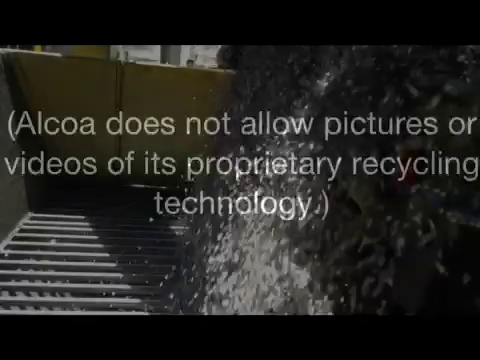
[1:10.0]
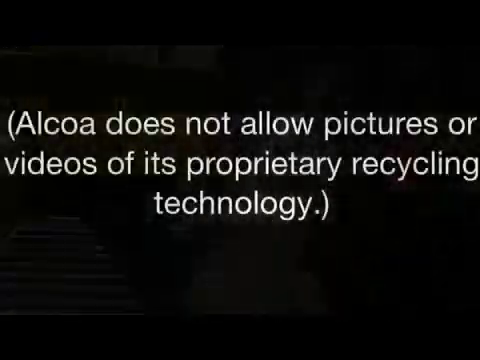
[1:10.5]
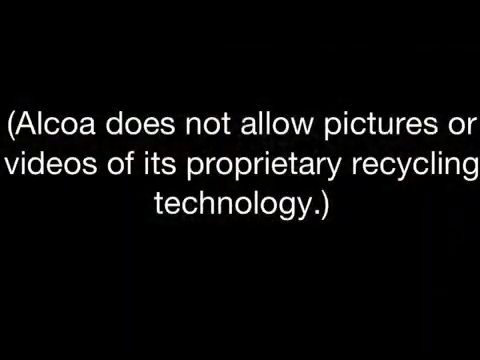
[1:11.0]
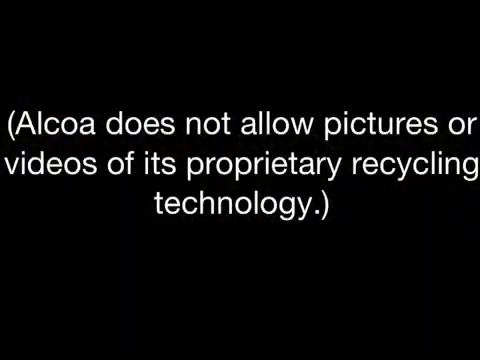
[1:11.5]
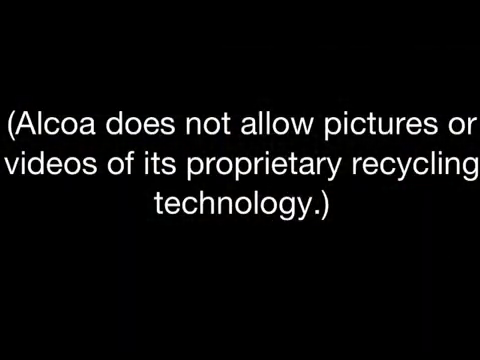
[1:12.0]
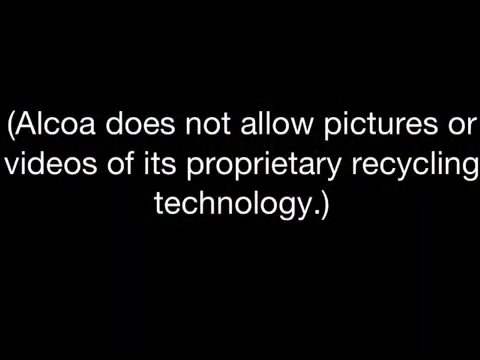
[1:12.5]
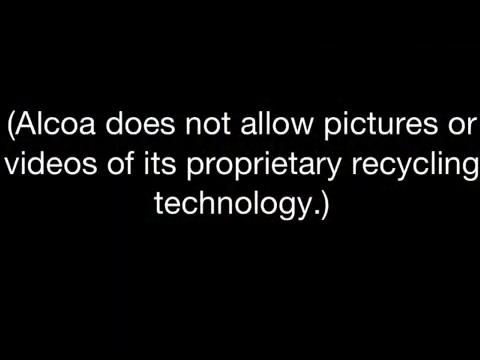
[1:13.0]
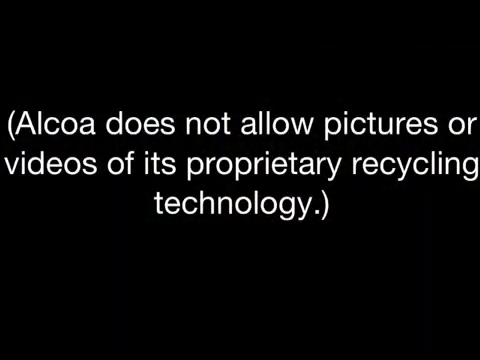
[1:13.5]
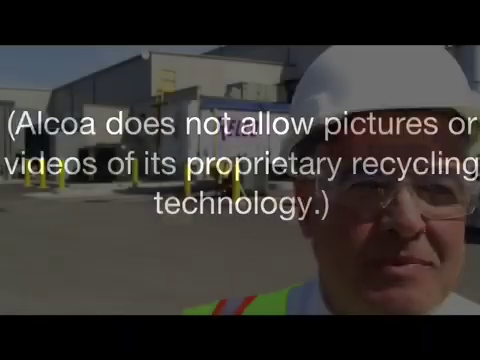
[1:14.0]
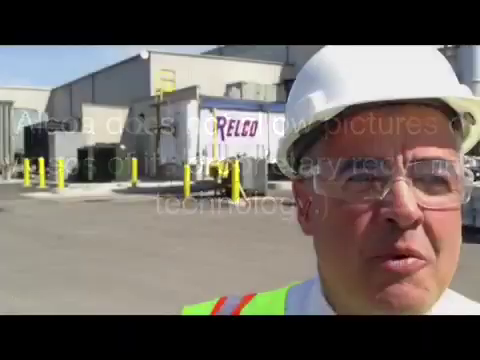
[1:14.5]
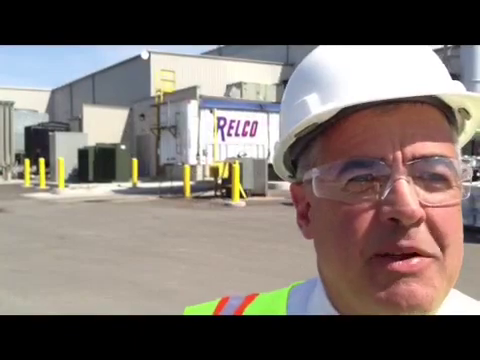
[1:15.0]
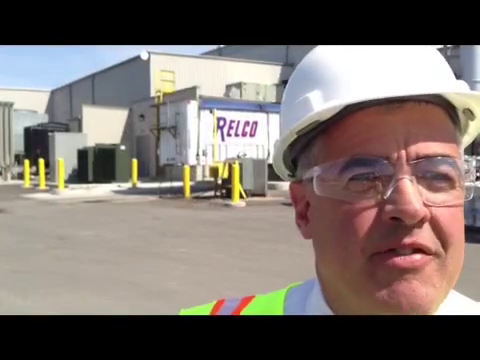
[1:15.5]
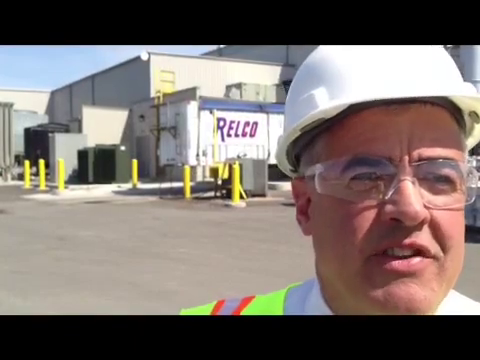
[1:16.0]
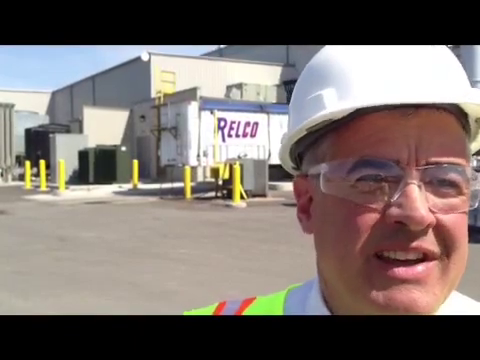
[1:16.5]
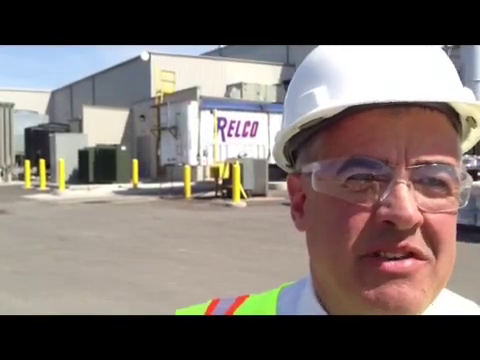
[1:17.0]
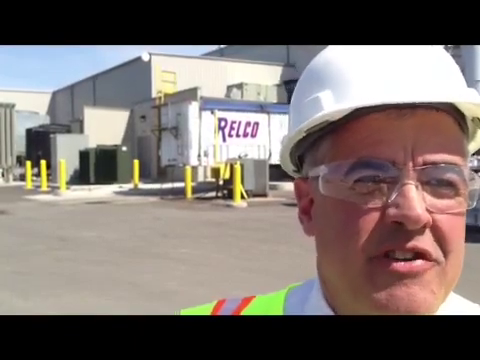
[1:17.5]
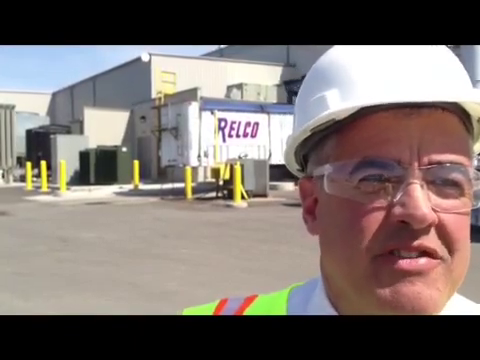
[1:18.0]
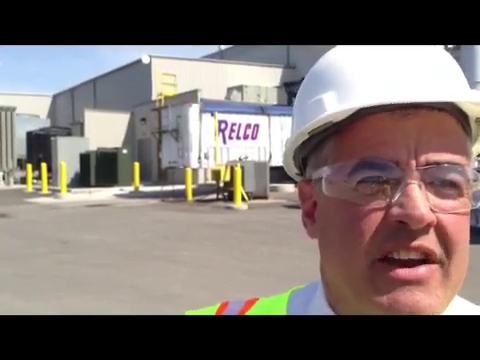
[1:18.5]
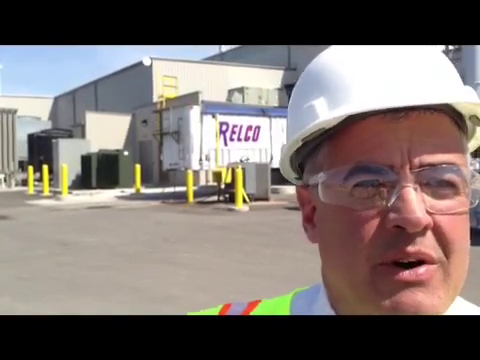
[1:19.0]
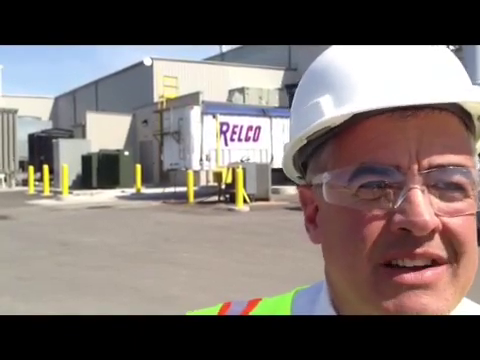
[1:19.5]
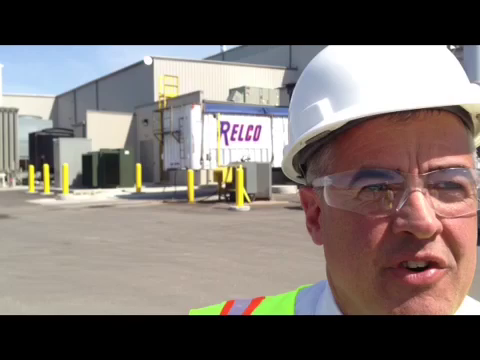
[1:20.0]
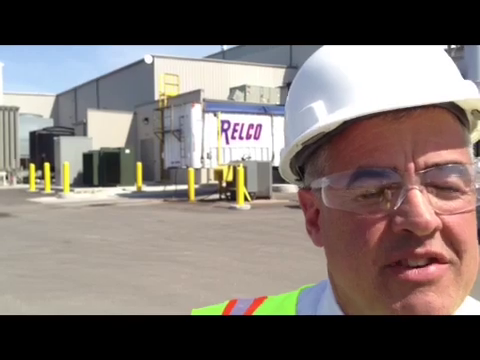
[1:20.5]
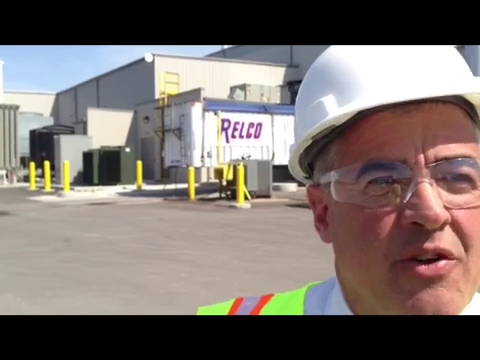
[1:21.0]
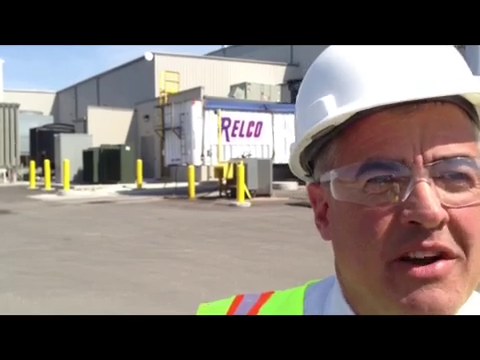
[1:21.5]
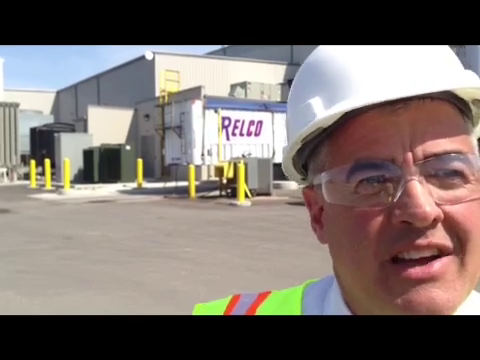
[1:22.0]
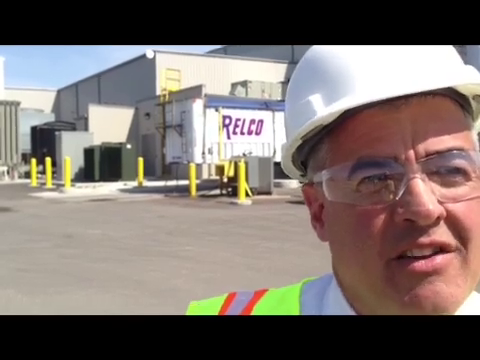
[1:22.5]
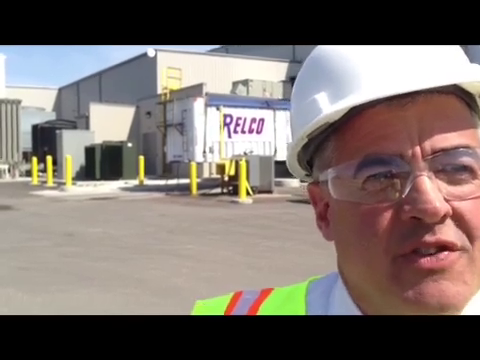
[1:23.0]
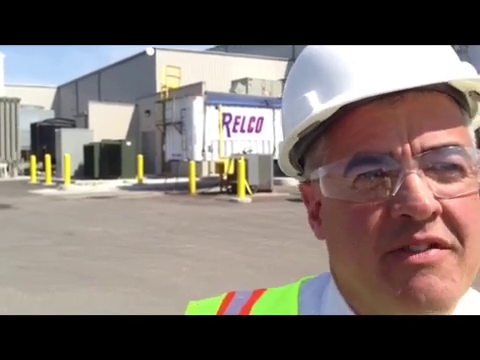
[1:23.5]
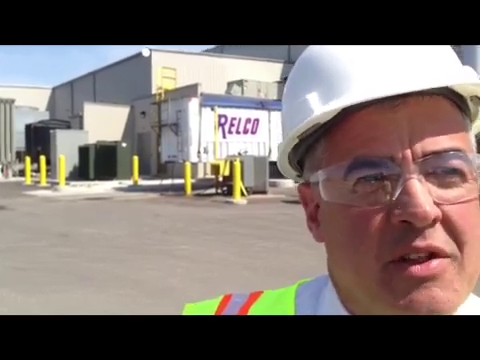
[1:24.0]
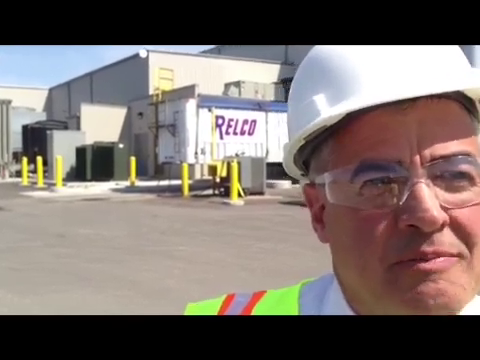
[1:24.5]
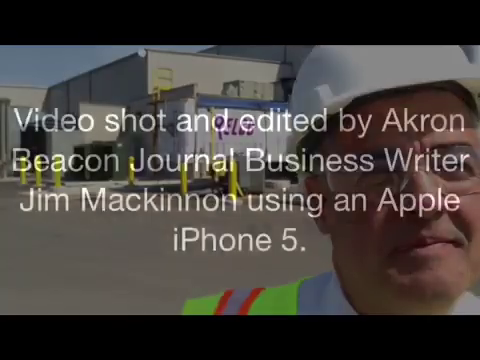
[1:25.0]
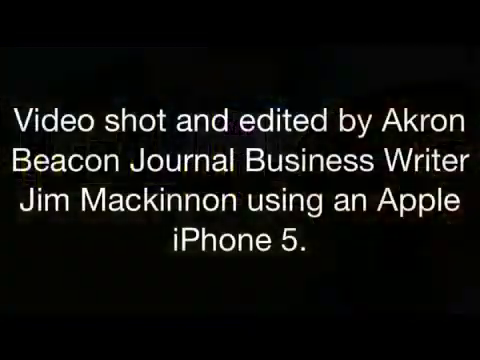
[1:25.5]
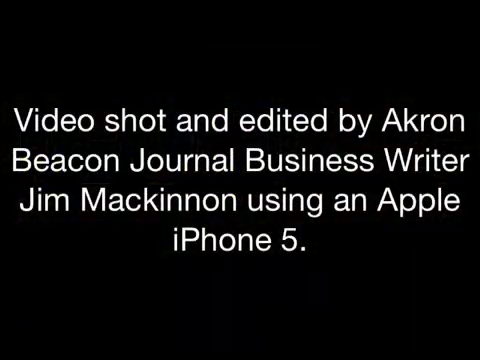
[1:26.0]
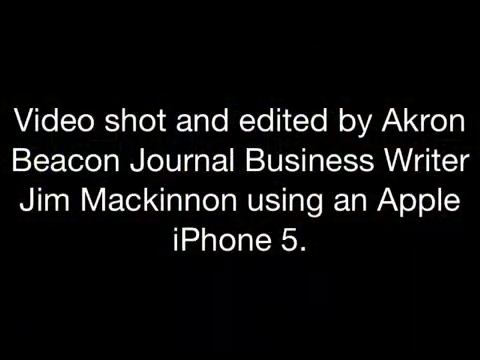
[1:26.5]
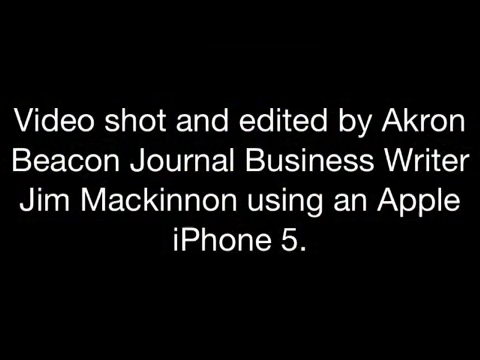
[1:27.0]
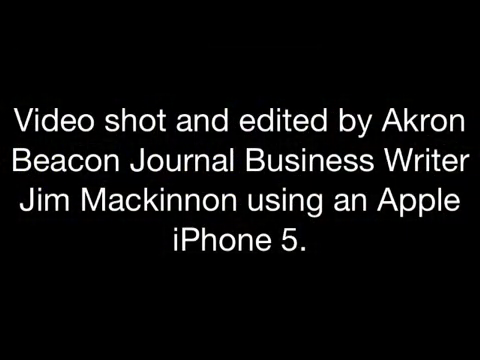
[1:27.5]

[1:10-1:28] Scrap, the recycled aluminium, is poured into a hopper. Text on screen reads "Alcoa does not allow pictures or videos of its proprietary recycling technology." The video moves back to the exterior of the factory, where a man wearing a yellow hi-vis jacket, safety glasses and a safety helmet talks to the camera. The video ends on a black backdrop with white text crediting the shooting and editing of the video to business writer Jim McKinnon using an Apple iPhone 5.